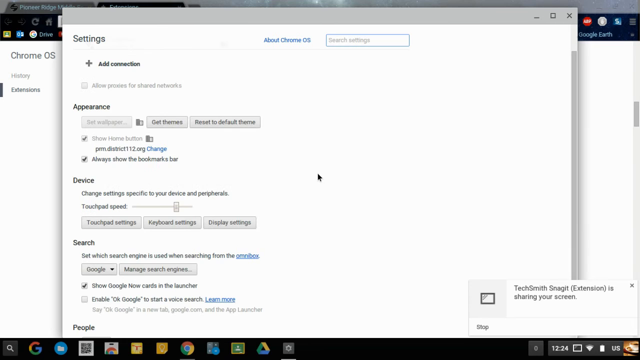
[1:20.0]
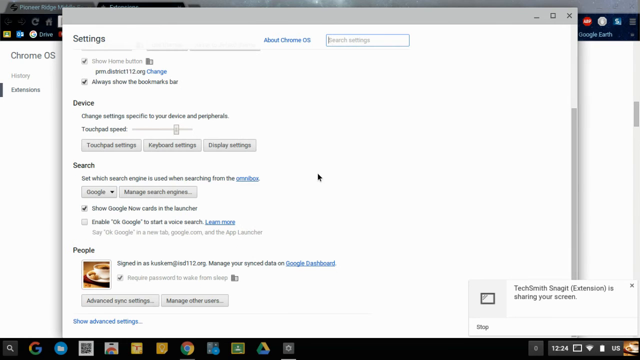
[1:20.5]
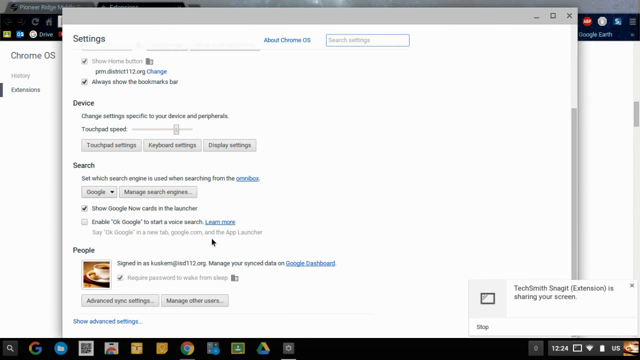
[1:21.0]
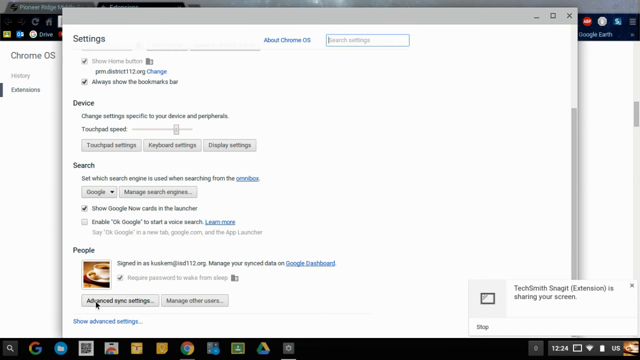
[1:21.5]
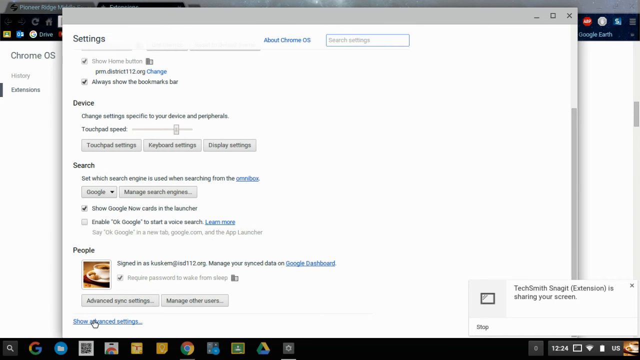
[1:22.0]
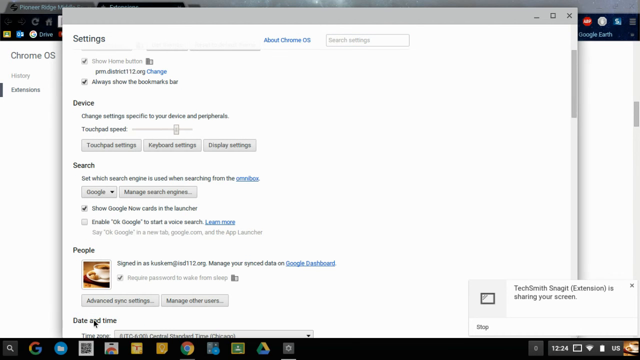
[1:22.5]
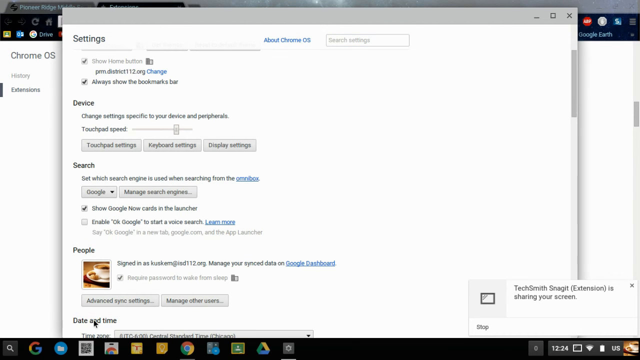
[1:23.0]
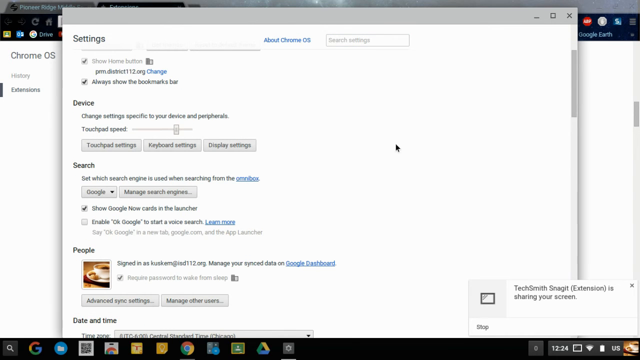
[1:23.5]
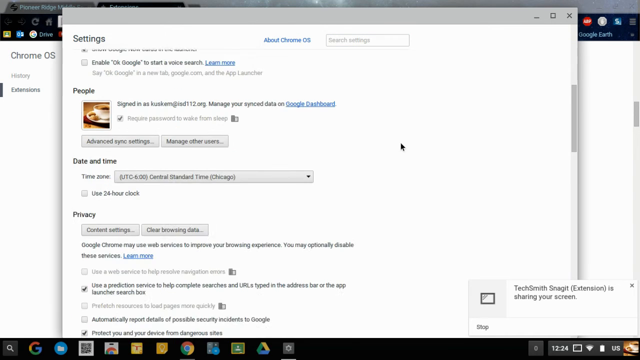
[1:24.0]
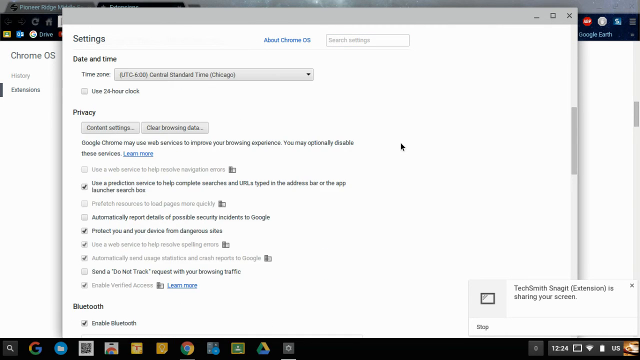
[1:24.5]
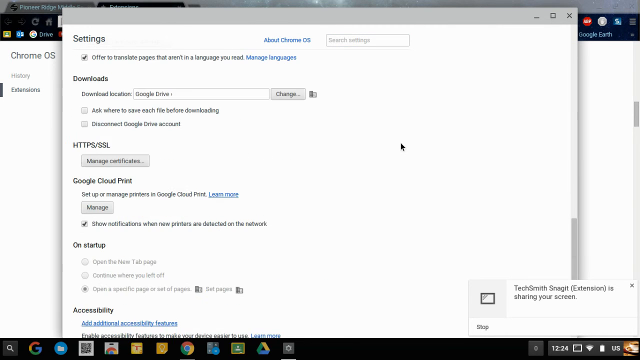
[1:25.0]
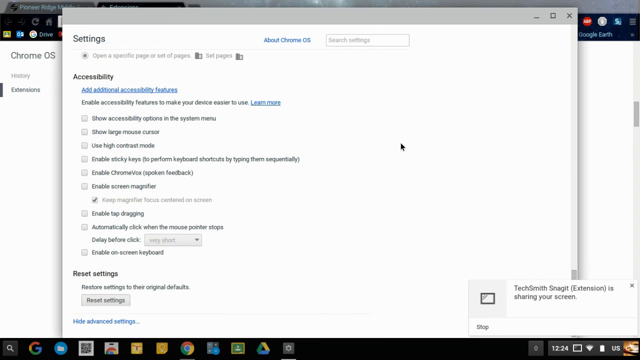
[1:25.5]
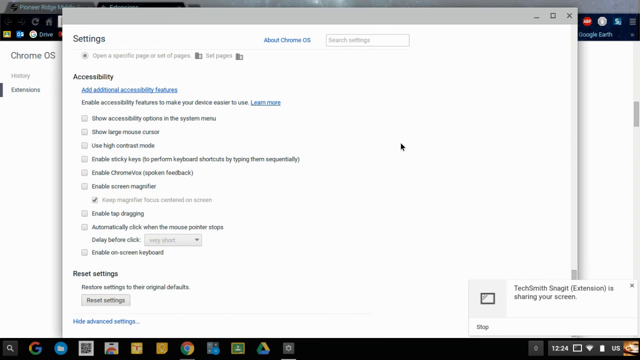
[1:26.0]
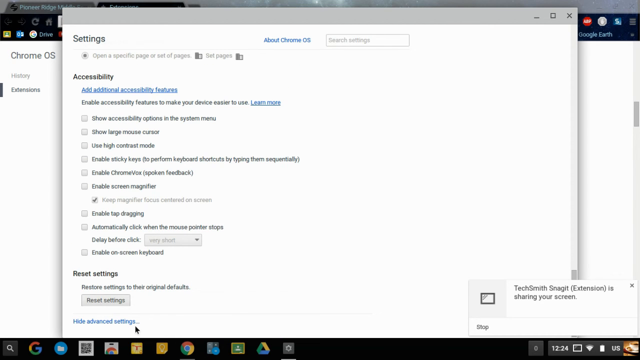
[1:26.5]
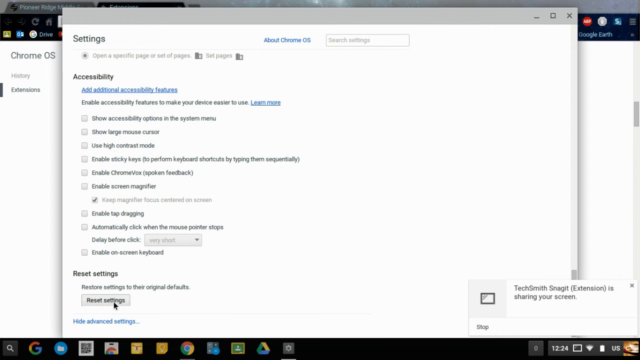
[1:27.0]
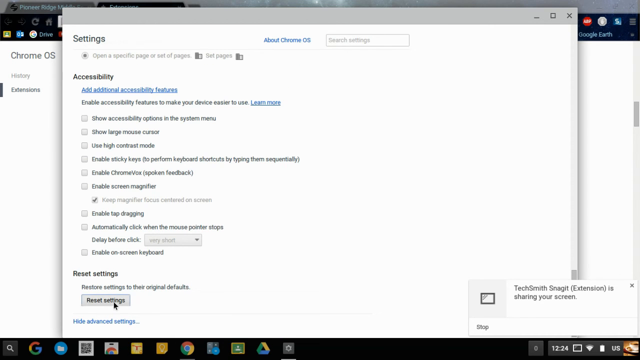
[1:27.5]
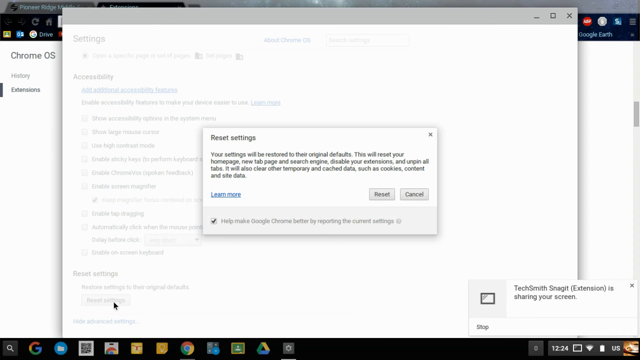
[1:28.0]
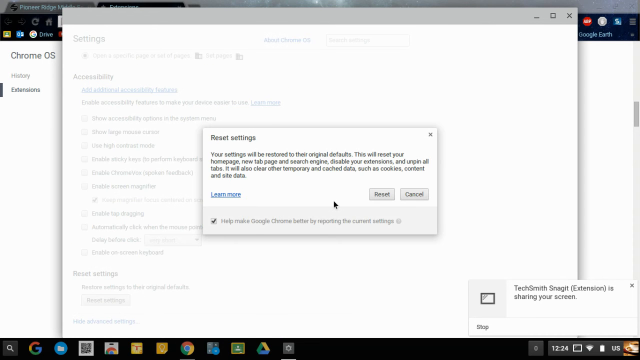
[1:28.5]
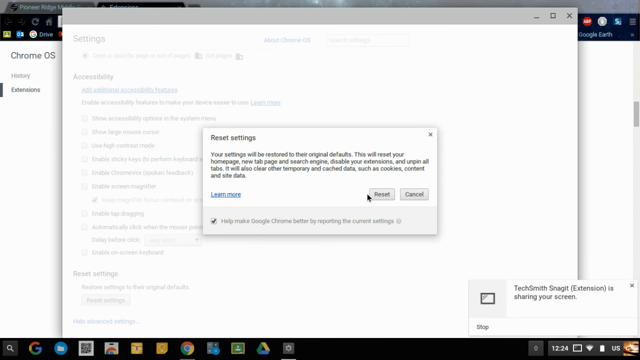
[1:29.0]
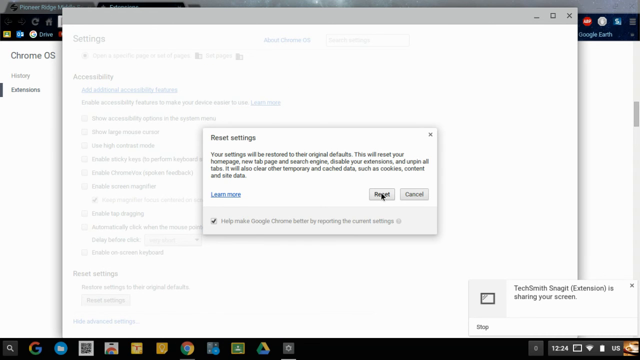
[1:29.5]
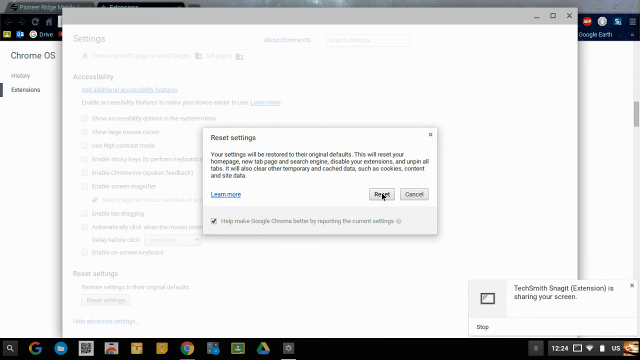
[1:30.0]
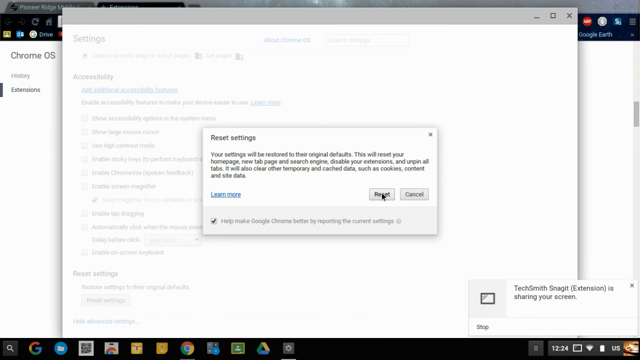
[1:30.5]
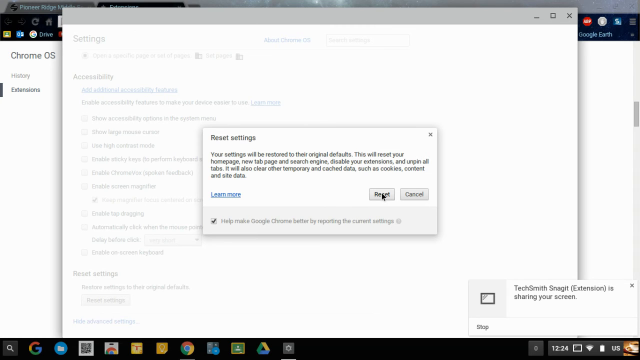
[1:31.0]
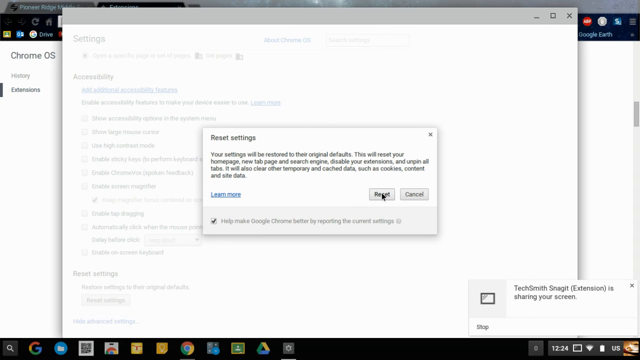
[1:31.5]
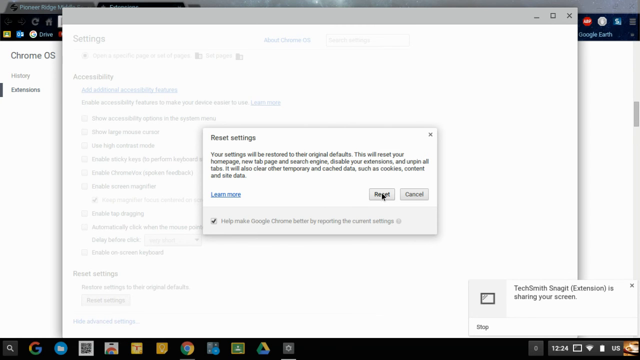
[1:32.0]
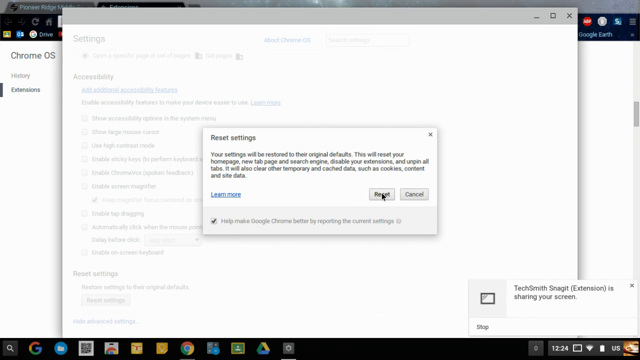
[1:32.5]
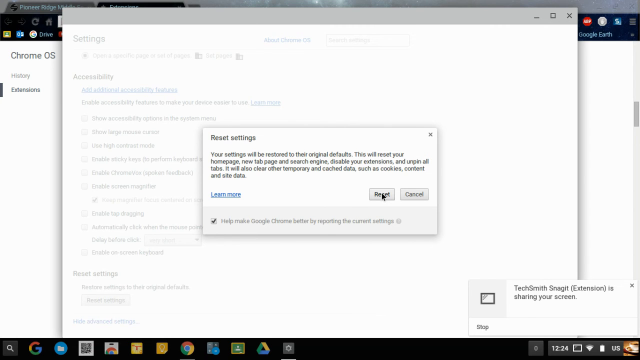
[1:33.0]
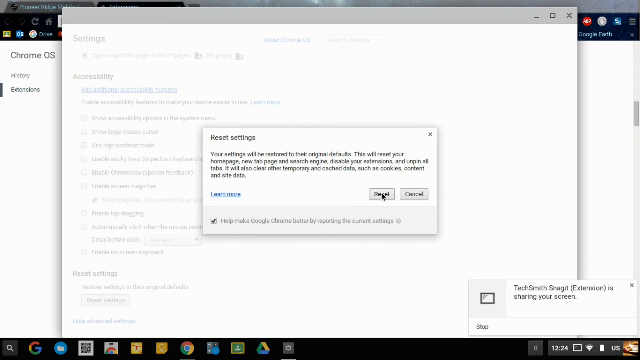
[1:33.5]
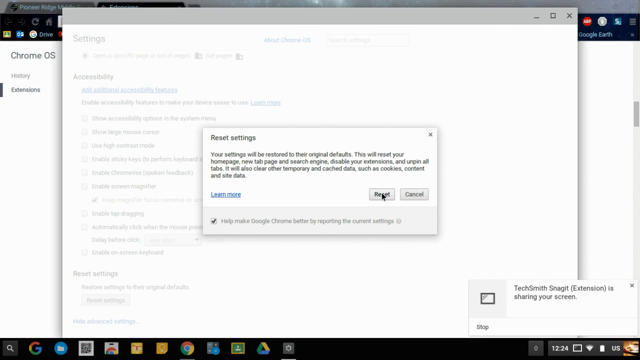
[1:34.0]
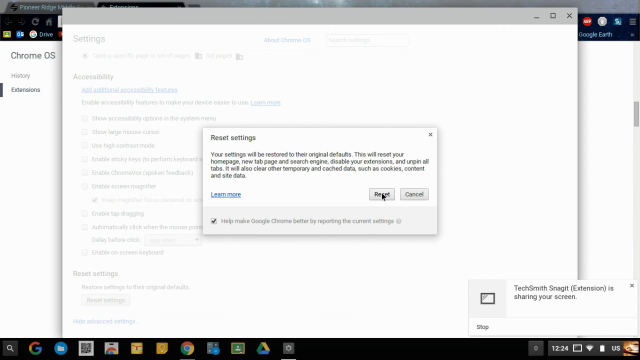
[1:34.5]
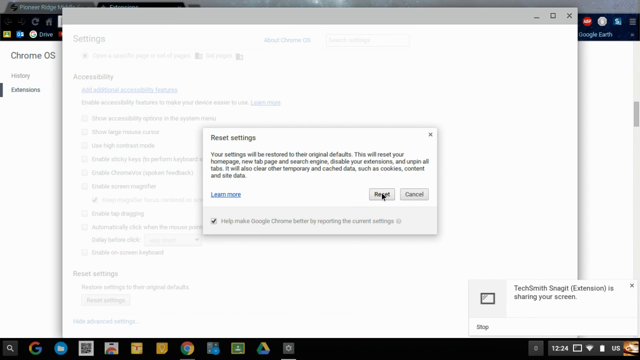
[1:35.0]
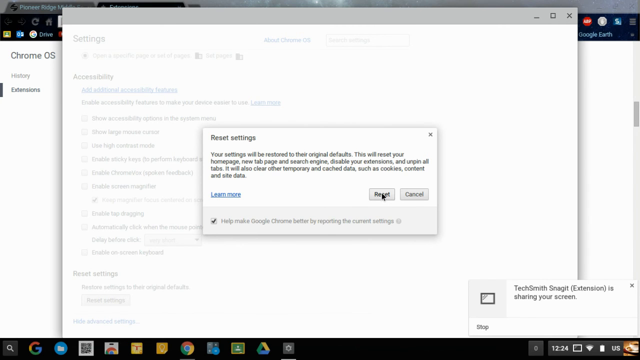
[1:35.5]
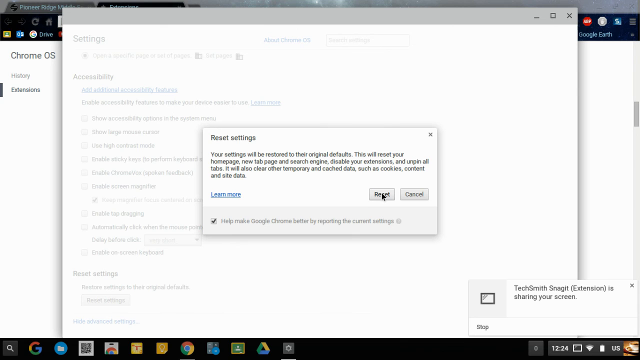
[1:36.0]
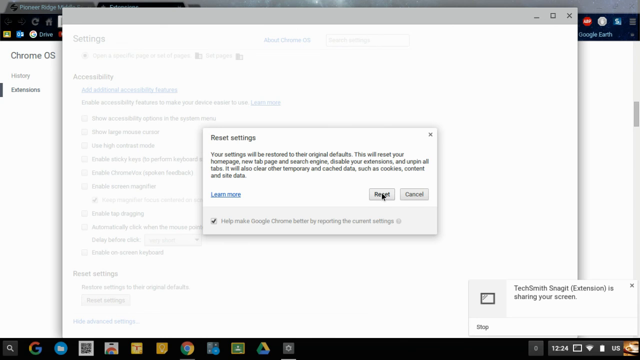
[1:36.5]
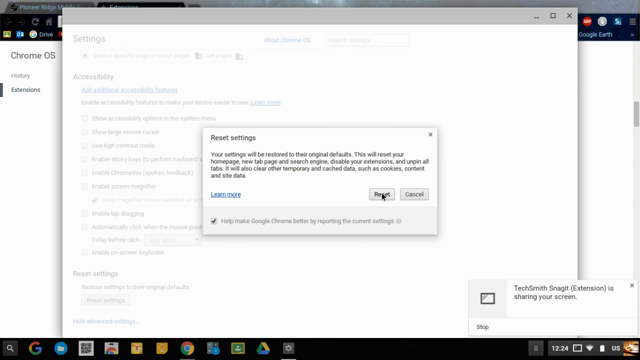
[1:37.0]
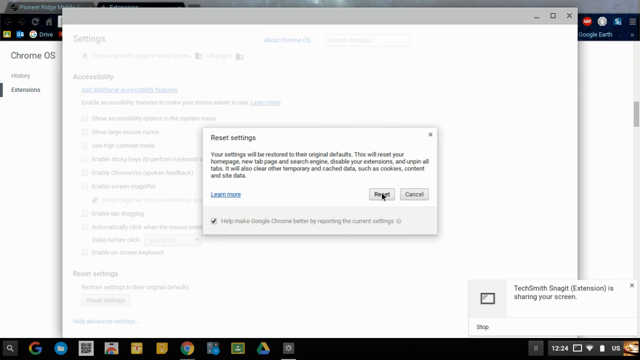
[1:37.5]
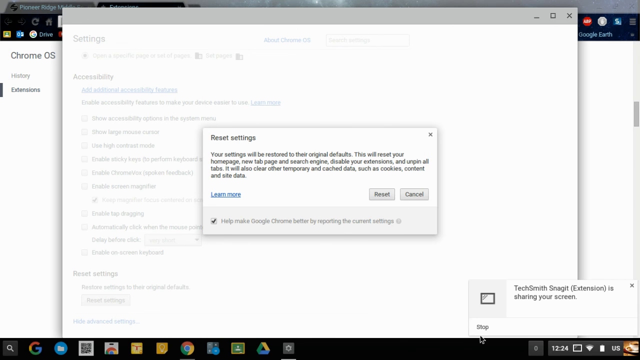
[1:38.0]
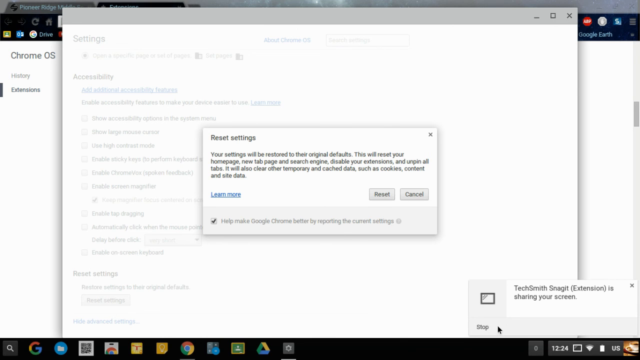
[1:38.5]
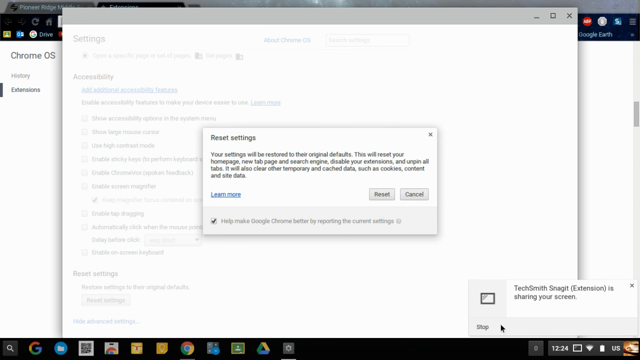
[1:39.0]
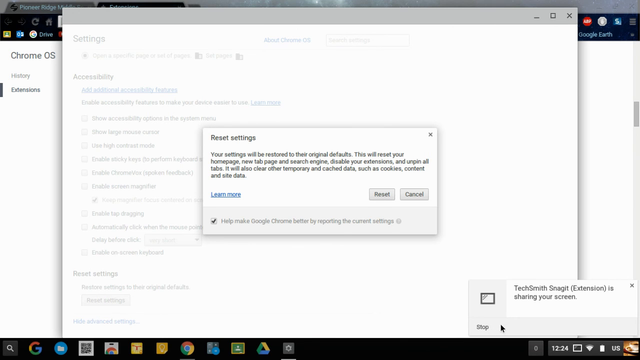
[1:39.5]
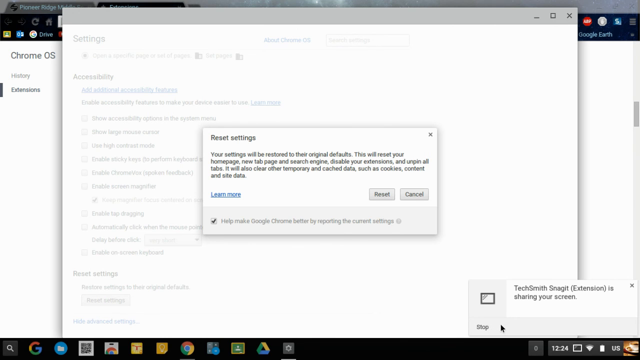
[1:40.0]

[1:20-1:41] The user scrolls down the settings page. The appearance section has get themes, reset default themes, and always show bookmark bar; the device section has touchpad settings, keyboard settings, and display settings. Further down are Google managed search engines, people signed in, HTTPS SSL managed certificates, downloads, Google Cloud point, and on startup, though most of that is grayed out. The accessibility section has options such as enable screen magnifier, enable sticky keys, show accessibility options, and large mouse cursor. Then comes reset settings; the user appears to push the reset settings button, which brings up a dialog reading "Your settings will be restored to original defaults." The mouse is then pulled away before the reset happens.